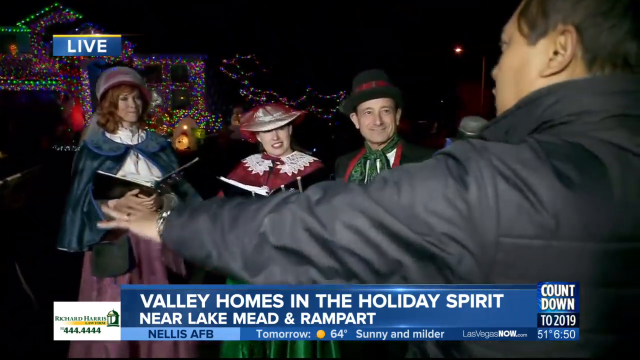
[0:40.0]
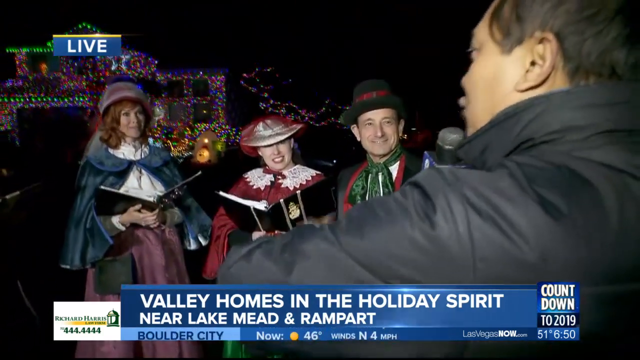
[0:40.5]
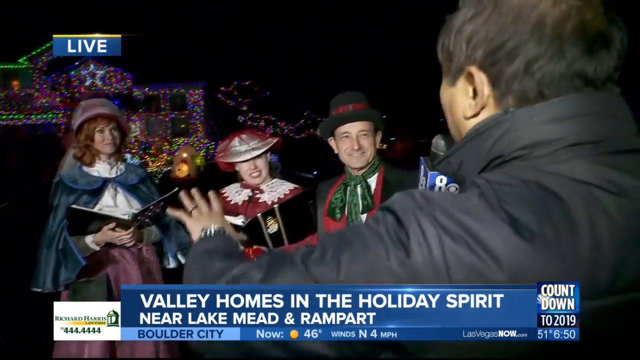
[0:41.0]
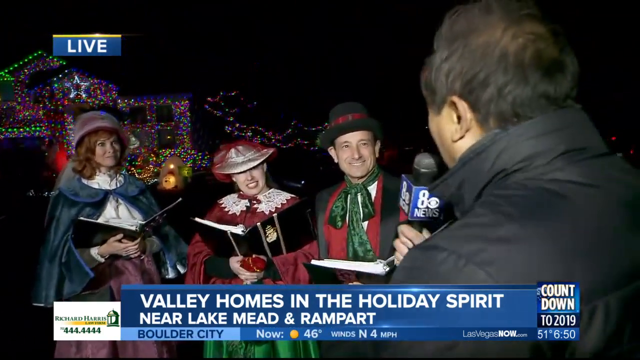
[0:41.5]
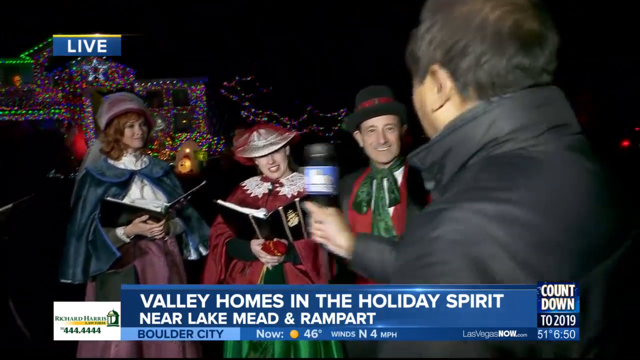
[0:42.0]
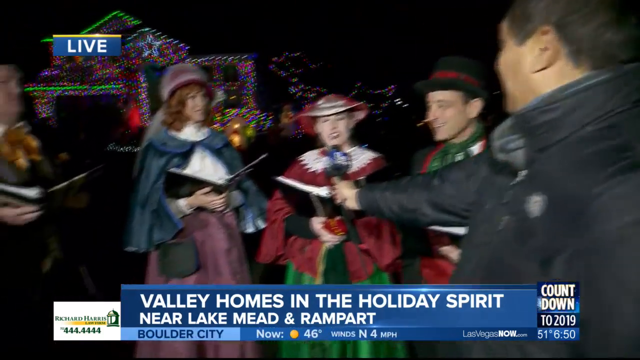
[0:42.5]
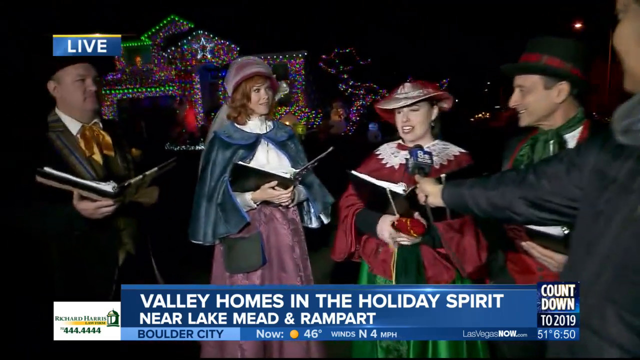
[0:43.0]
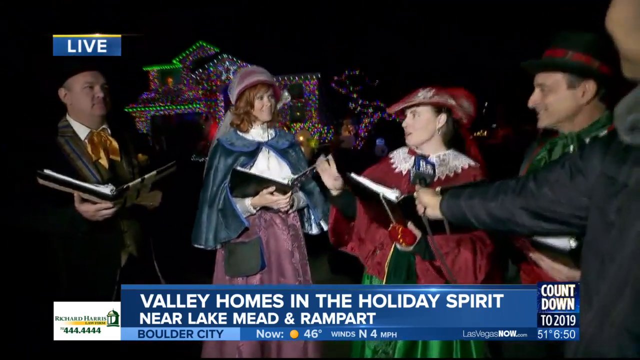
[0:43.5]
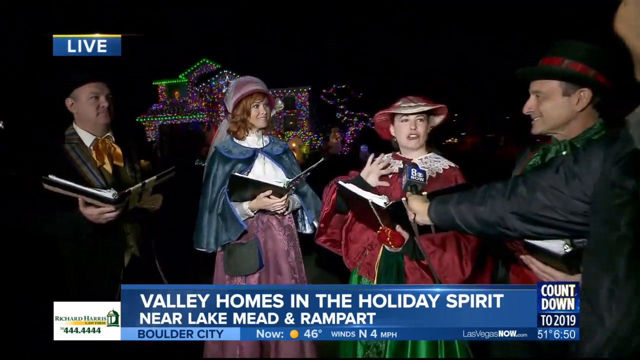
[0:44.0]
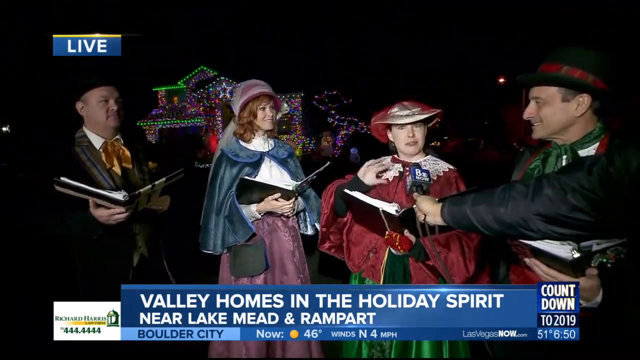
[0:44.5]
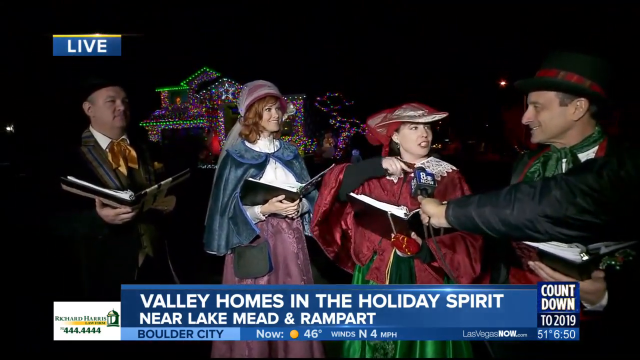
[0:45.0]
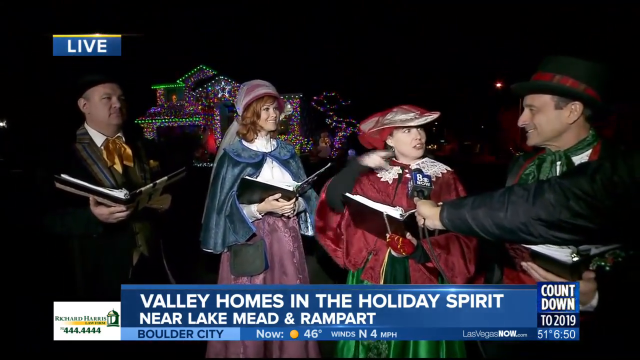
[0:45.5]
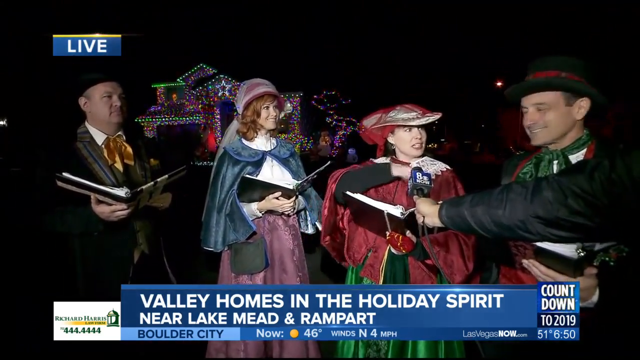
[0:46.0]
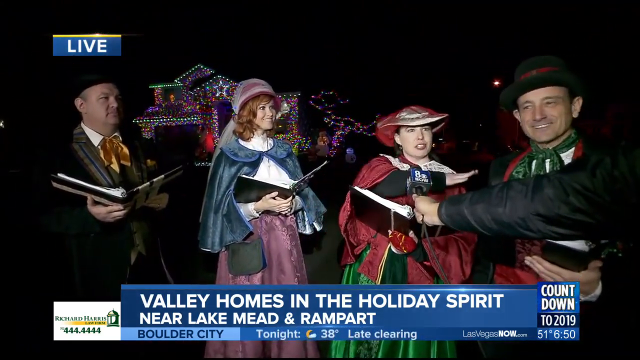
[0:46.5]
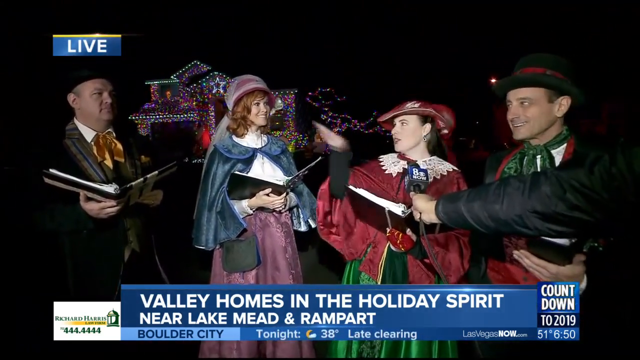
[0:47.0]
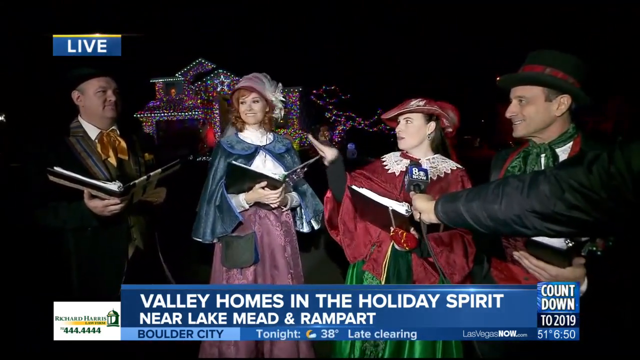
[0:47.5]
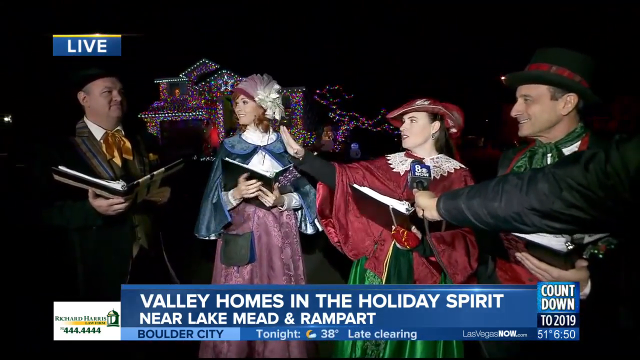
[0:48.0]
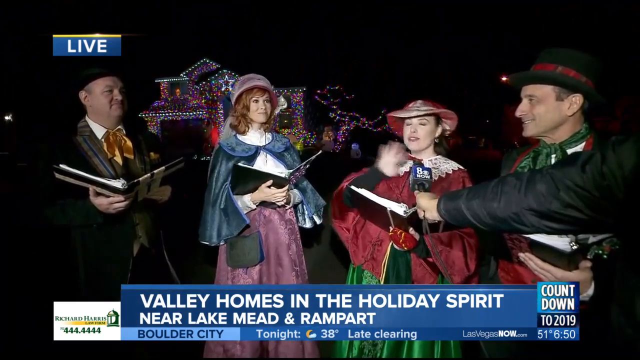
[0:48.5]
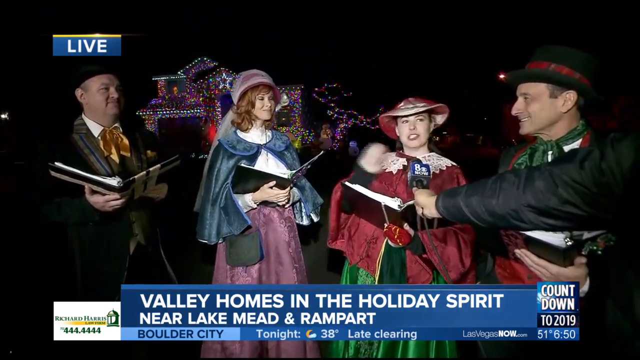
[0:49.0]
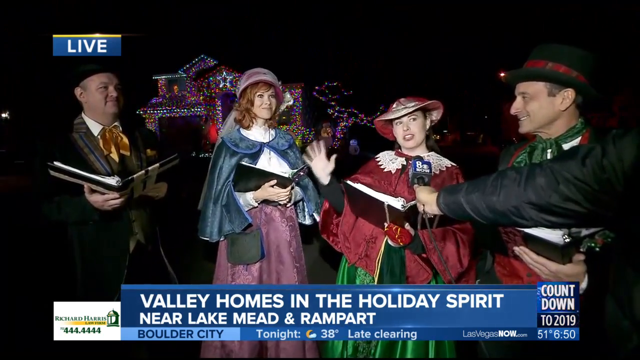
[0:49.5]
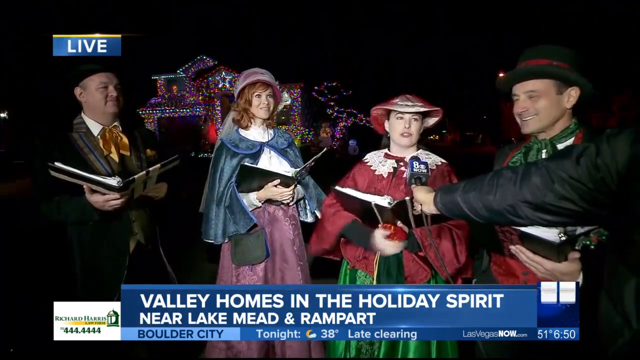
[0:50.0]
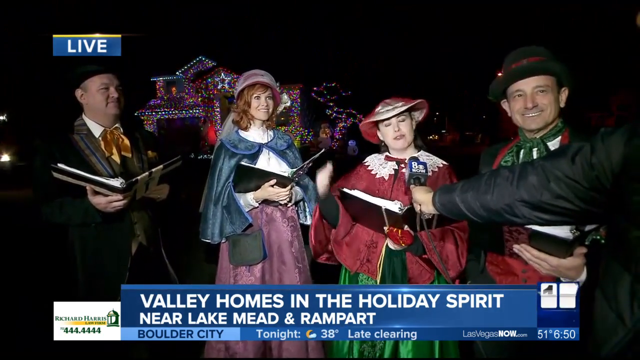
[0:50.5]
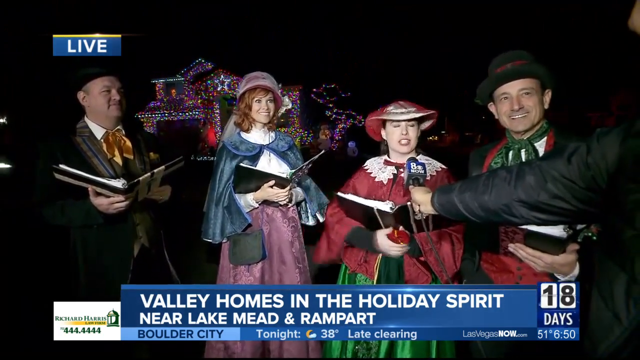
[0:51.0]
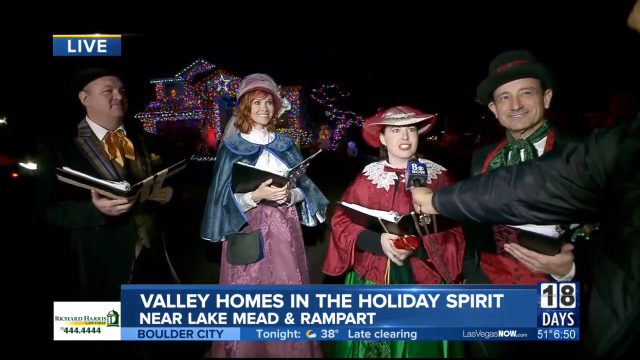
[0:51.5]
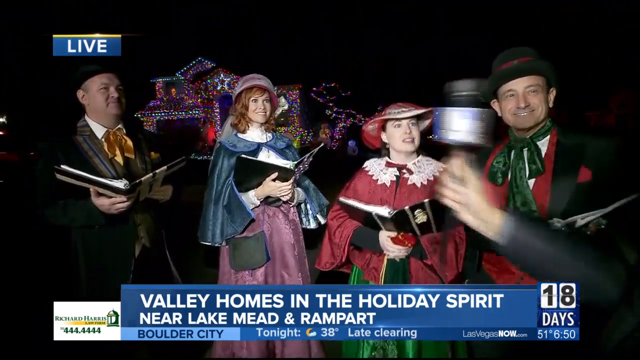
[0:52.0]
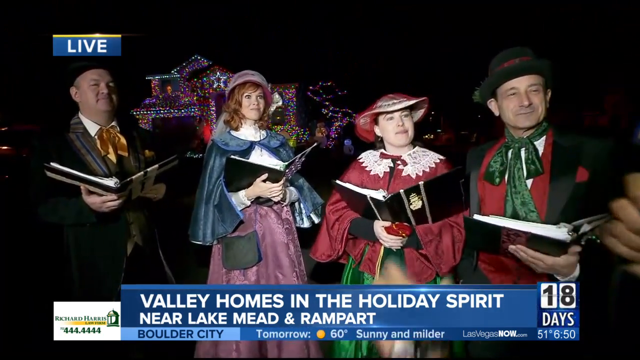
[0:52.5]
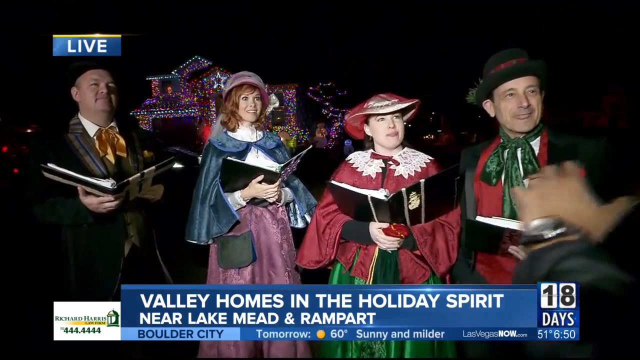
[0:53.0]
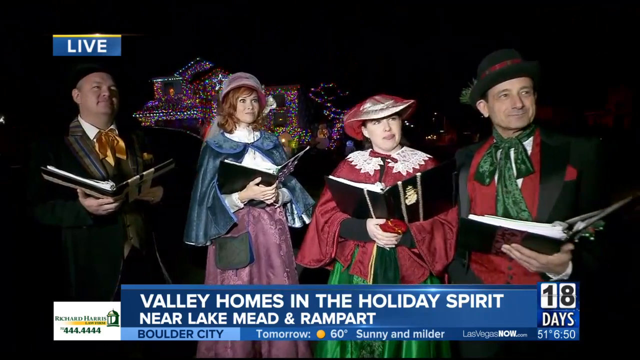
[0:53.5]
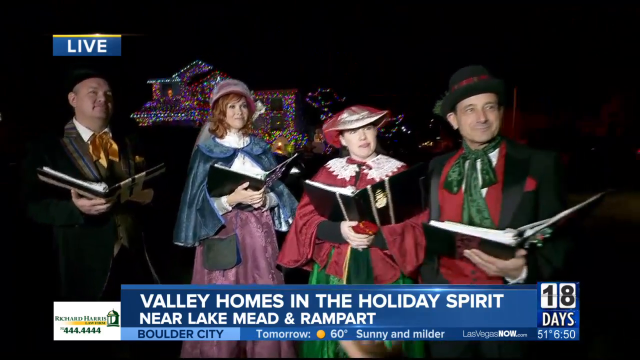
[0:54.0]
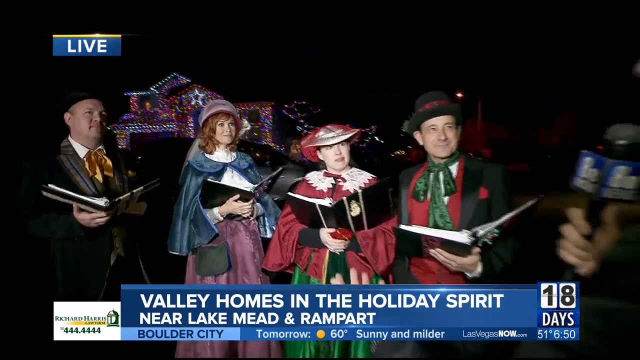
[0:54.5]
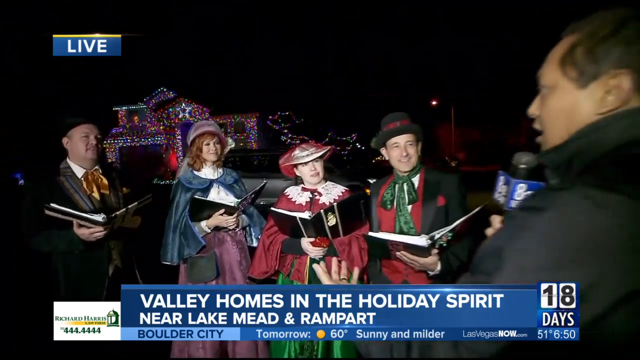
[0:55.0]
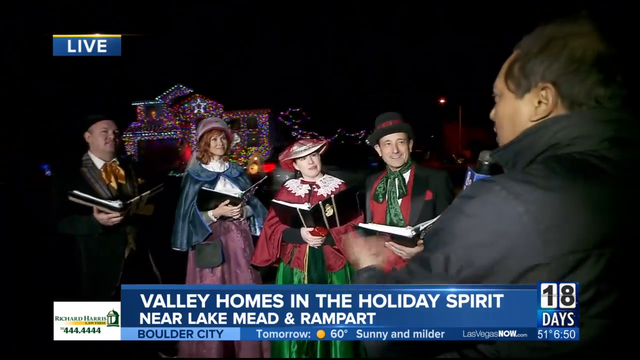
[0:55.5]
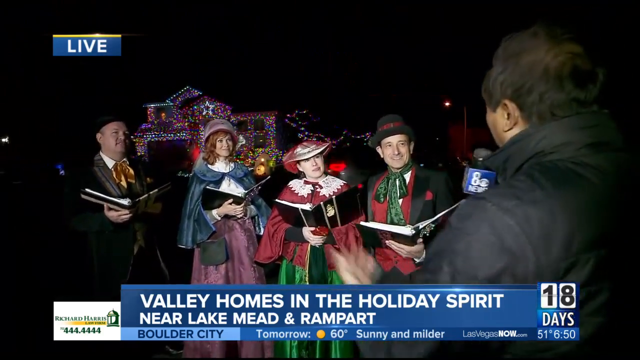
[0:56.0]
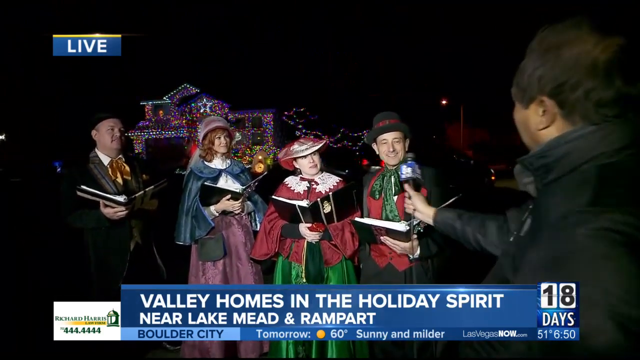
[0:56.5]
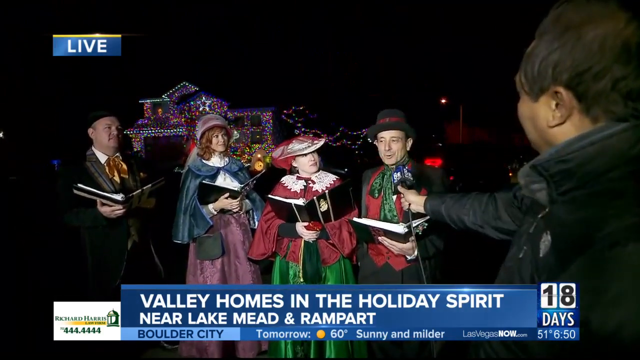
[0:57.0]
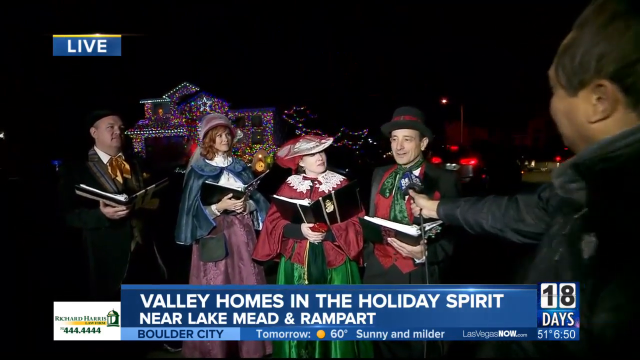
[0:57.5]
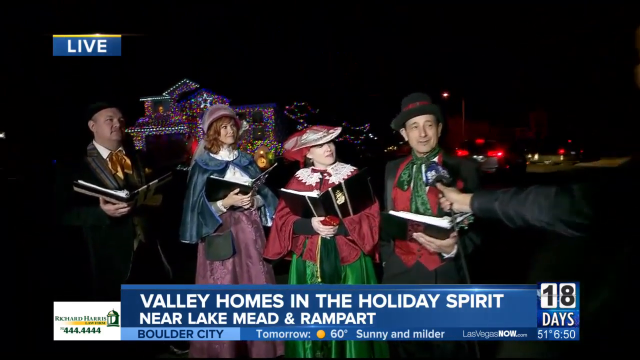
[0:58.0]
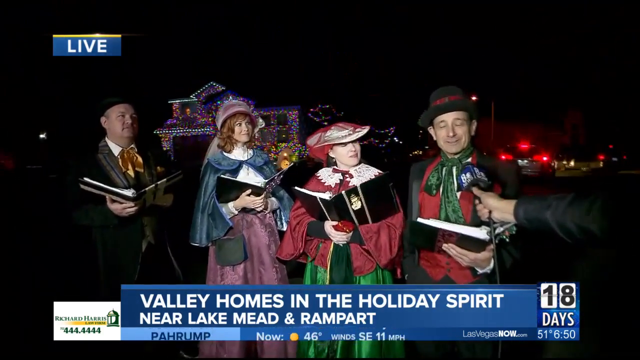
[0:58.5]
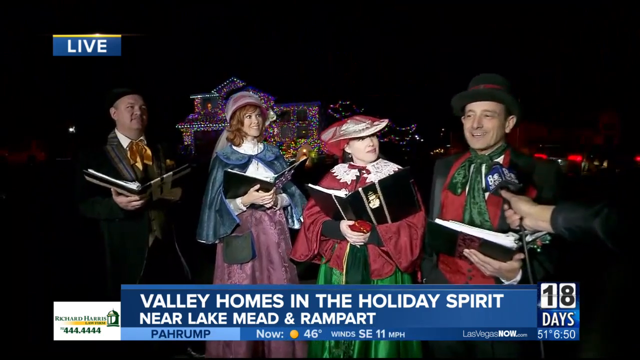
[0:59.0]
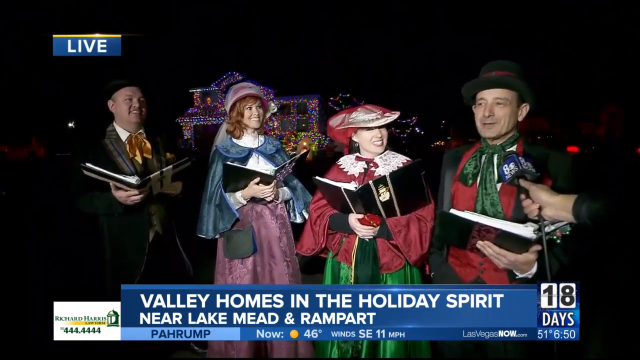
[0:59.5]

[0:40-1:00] The reporter begins interviewing the carol singers, four in total, all standing in a row. On the left is a white man who looks to be around 50, wearing a top hat, a gold cravat and a heavy overcoat and holding a hymn book. To his right is a woman who looks to be in her 40s, wearing a very old-fashioned pink hat and overcoat with a blue shawl over it and a white ruffled blouse; she has auburn shoulder-length hair and also holds a hymn book open. Like the man to her left, she is turned towards the reporter and smiling at him. On her right is a woman in a red shawl with a very old-fashioned red hat, and on her right is the last carol singer, a man in a top hat with a green cravat around his neck. The interviewer asks the woman in red questions and she speaks to him very animatedly, smiling and gesturing with her hand to her two male counterparts. The interviewer brings the mic back to his mouth to ask another question, then presents the microphone to the man standing at the right end. More of his outfit is visible now: a heavy black overcoat and a red vest with the green cravat.